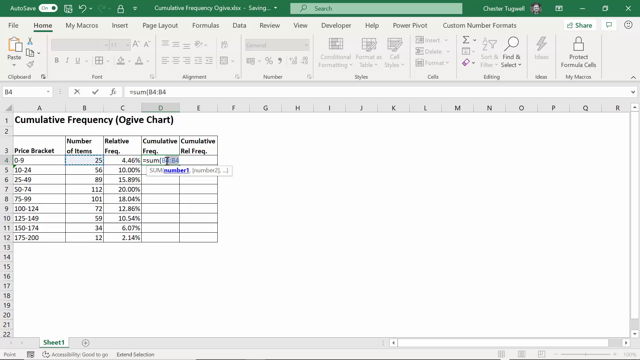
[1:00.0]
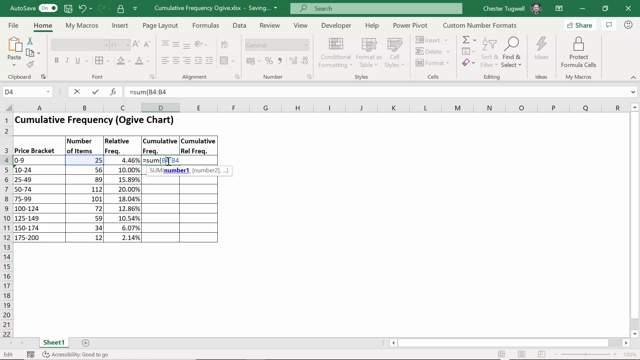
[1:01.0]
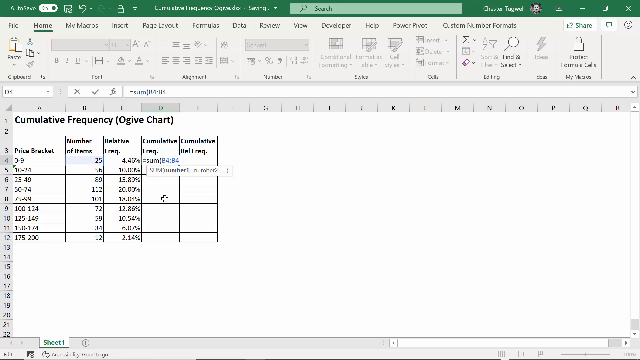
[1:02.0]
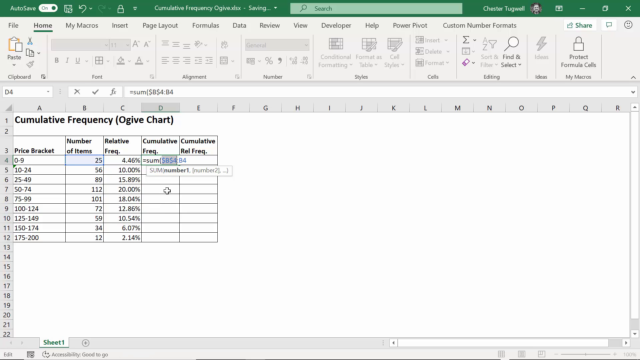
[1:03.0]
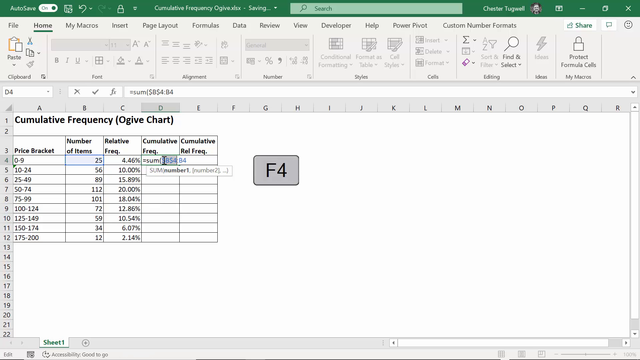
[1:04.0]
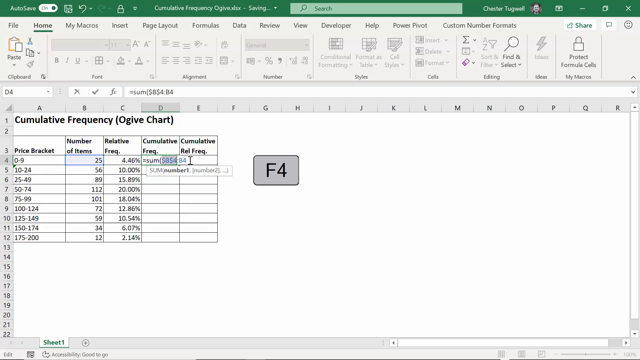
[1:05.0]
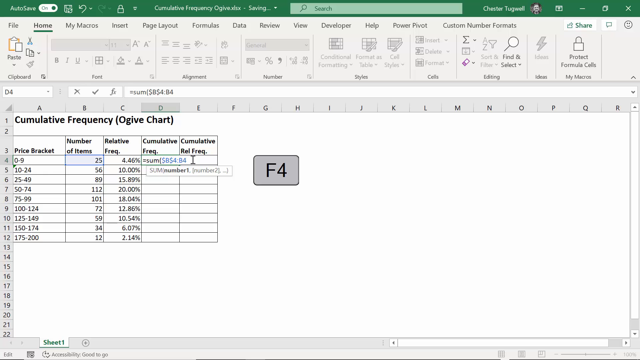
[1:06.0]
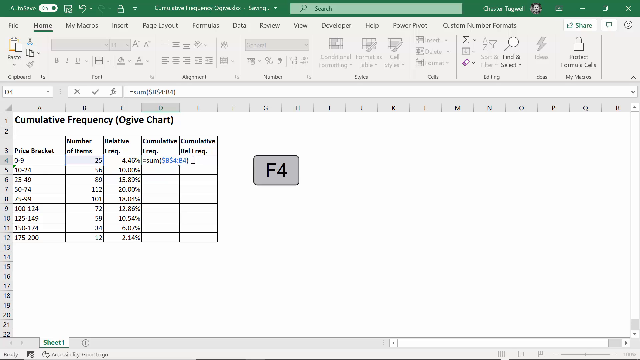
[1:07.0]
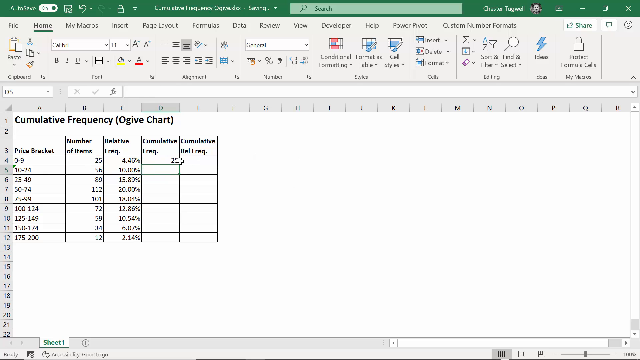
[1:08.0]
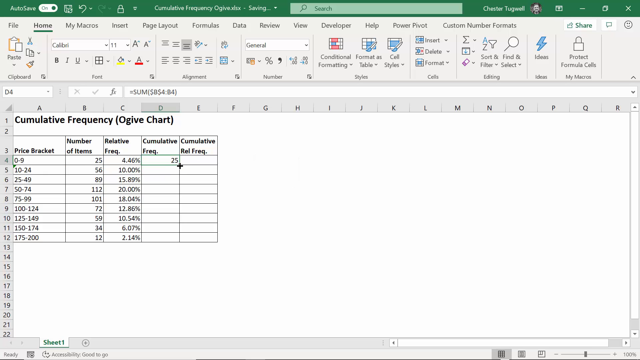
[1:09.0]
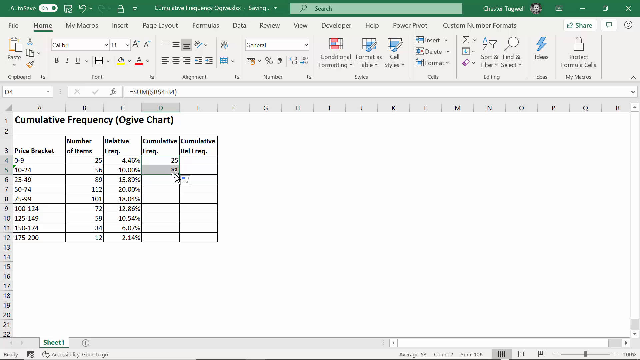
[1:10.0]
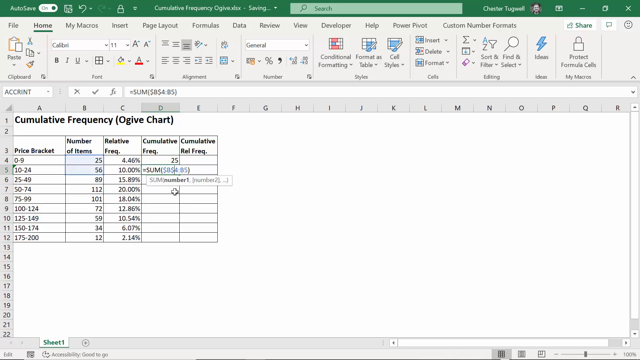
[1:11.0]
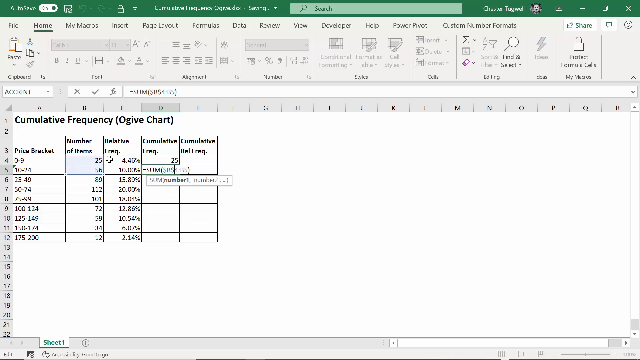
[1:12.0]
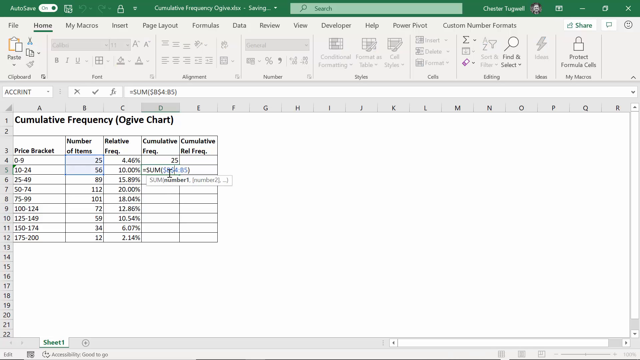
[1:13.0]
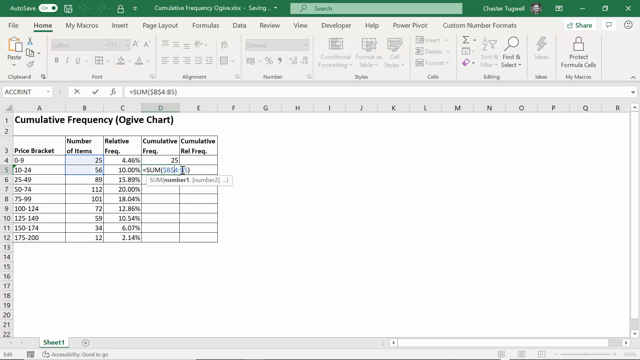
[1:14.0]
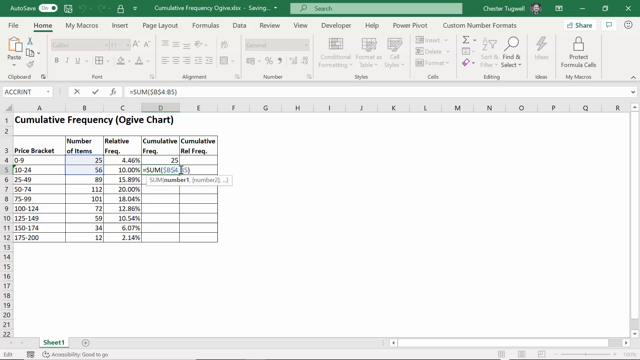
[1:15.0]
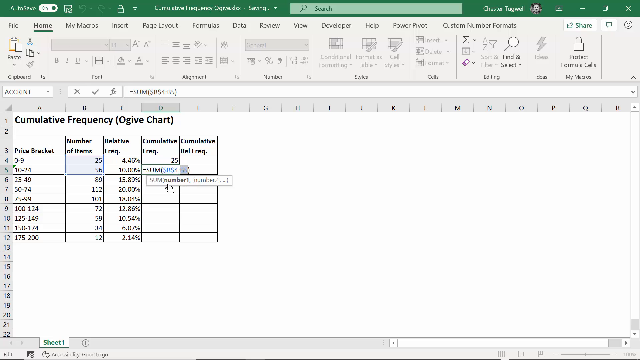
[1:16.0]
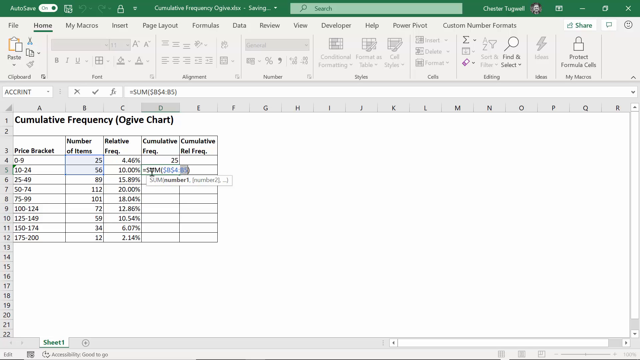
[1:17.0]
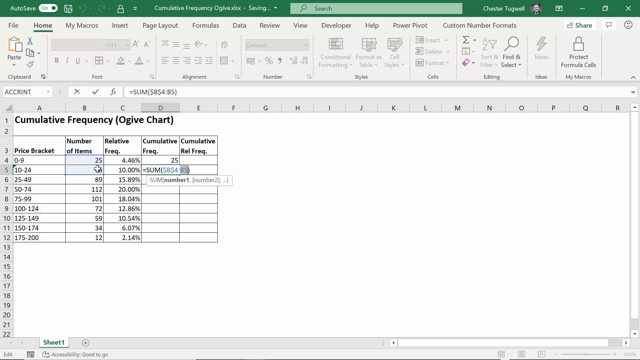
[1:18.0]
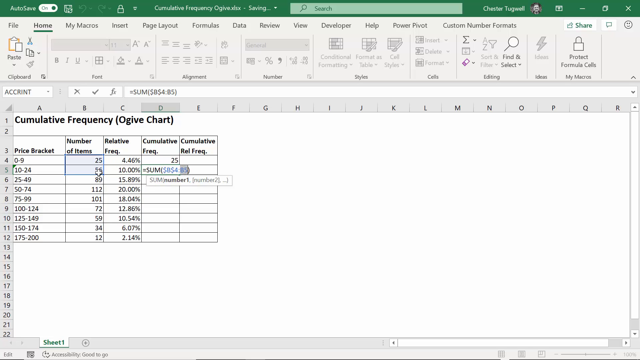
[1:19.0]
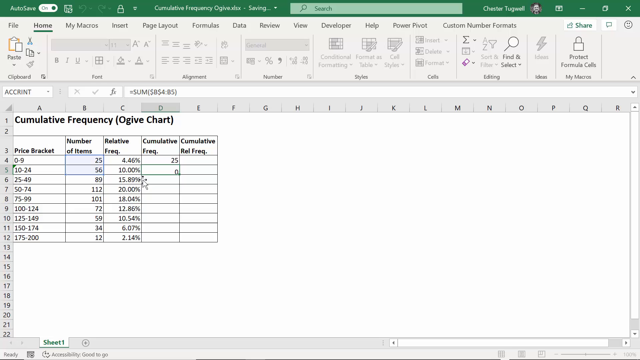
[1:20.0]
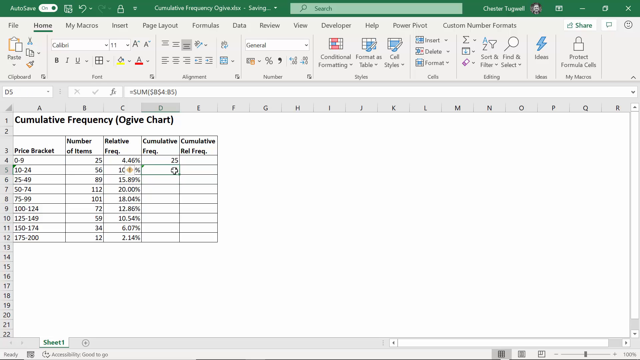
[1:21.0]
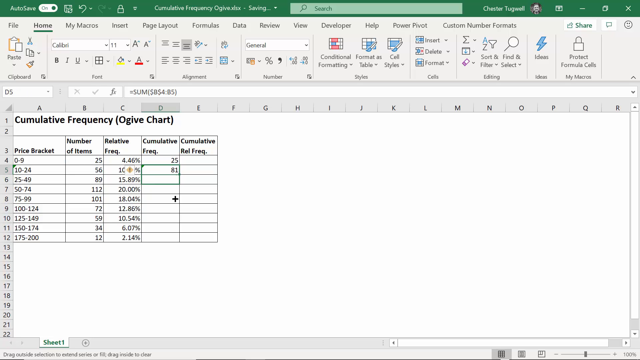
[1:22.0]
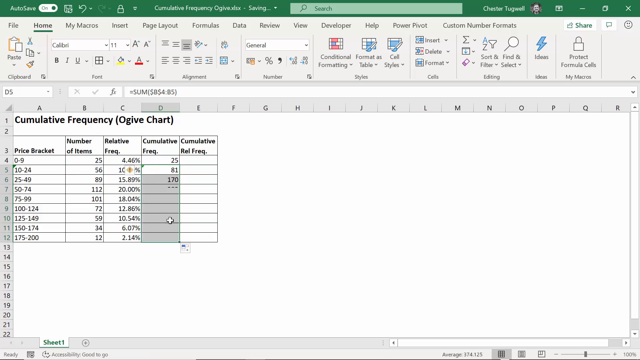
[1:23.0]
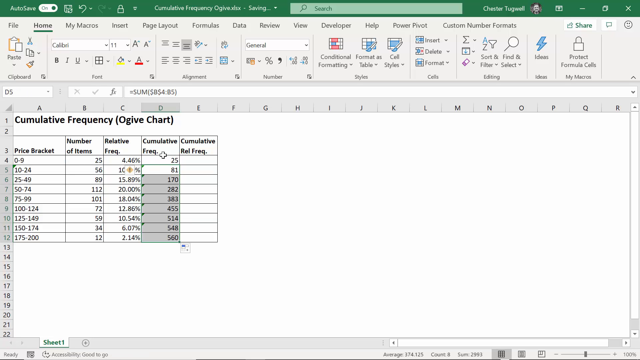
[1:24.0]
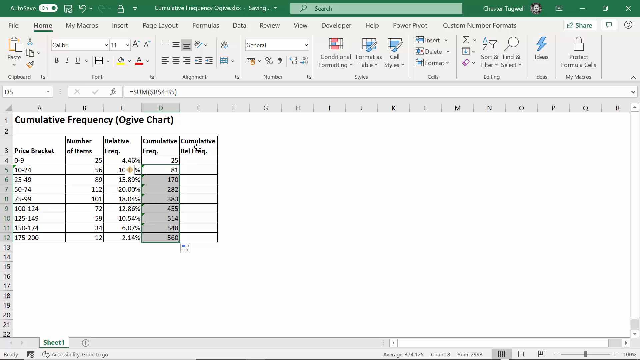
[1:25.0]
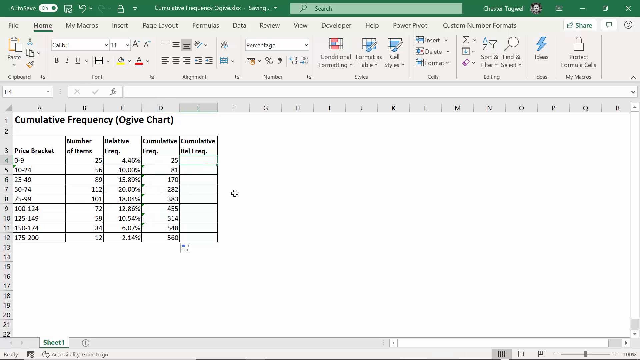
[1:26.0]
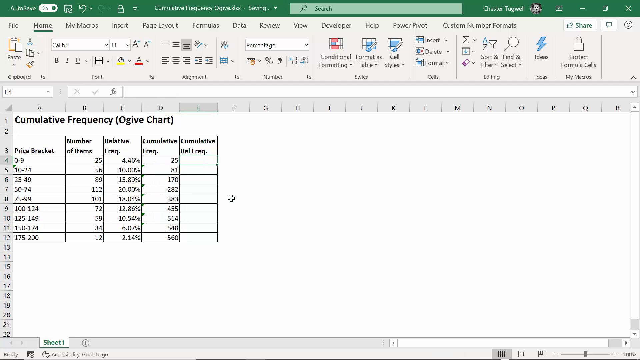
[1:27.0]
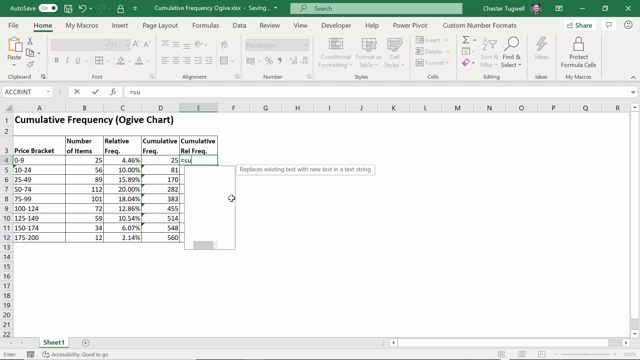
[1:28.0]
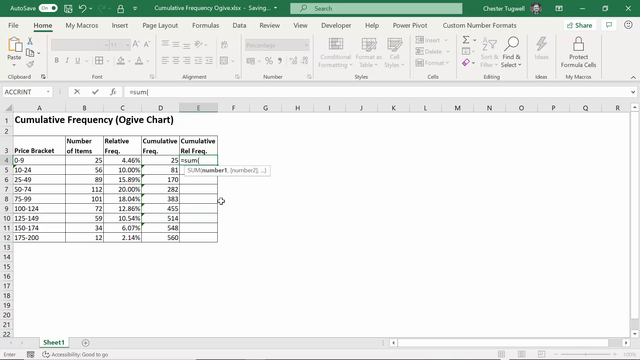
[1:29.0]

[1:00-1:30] The person starts in cell D4 and enters the number 25, the same value as B4 in the number of items column. As they type in D4, F4 appears on the screen. They add up numbers, and more numbers appear in every cell of the column as the sums are calculated from the number of items. With this column complete, the price bracket, number of items, relative frequency and cumulative frequency columns are all filled in, and only the cumulative relative frequency column remains empty. The person starts typing in the first cell of the cumulative rel frequency column, and then the video cuts.